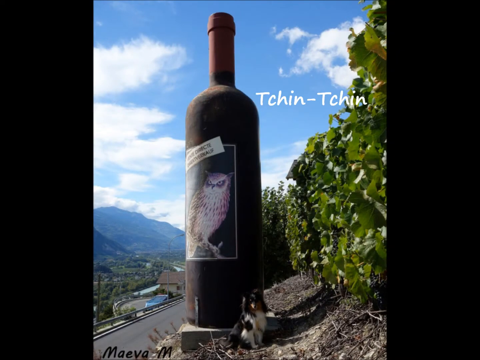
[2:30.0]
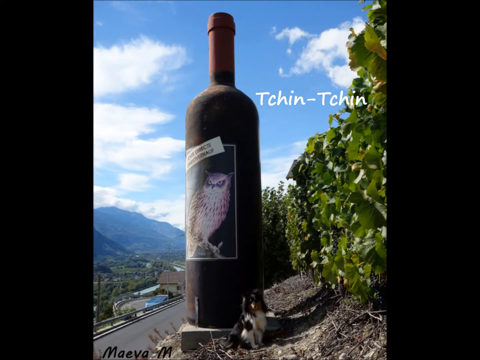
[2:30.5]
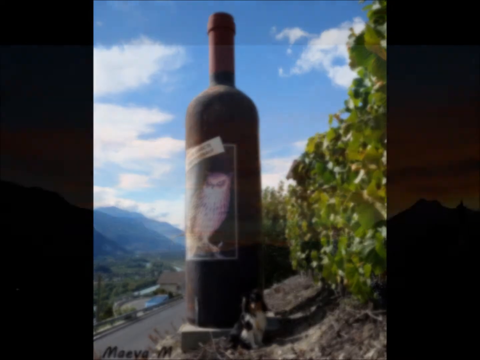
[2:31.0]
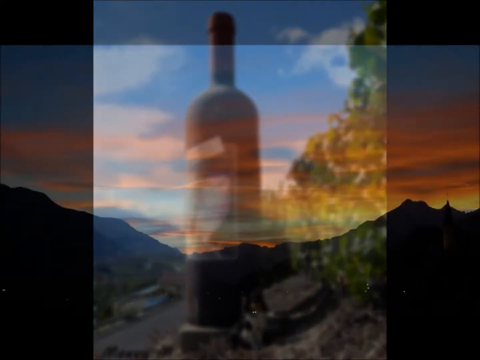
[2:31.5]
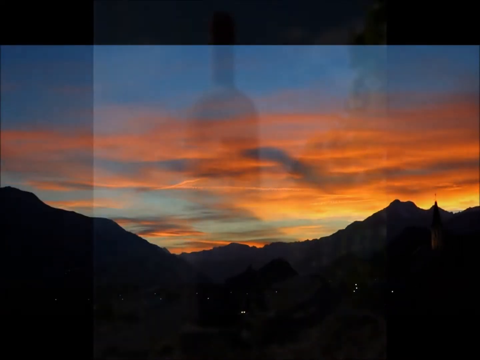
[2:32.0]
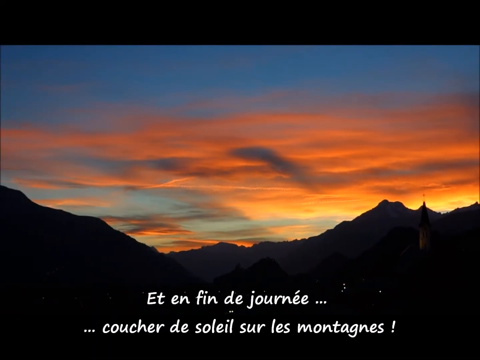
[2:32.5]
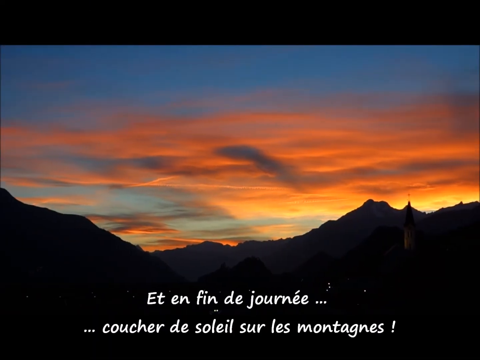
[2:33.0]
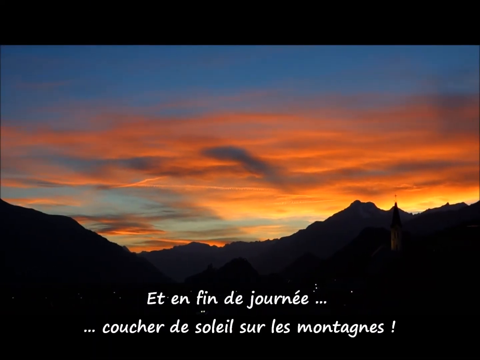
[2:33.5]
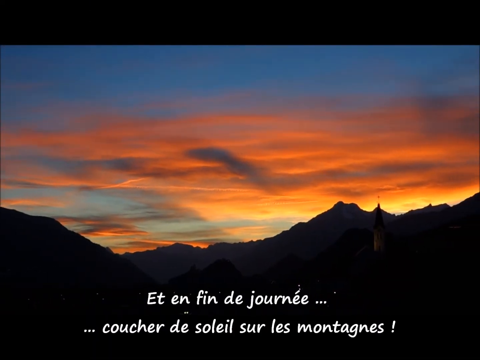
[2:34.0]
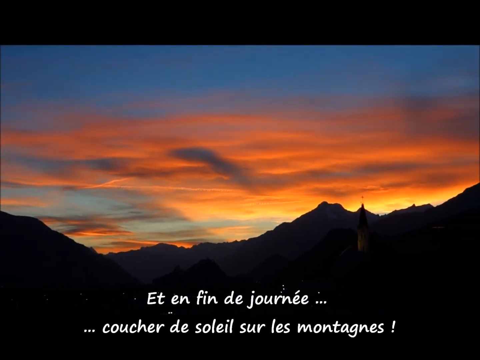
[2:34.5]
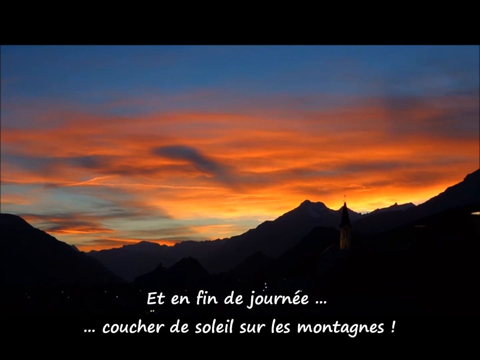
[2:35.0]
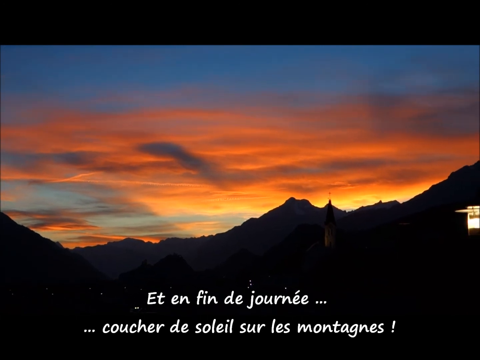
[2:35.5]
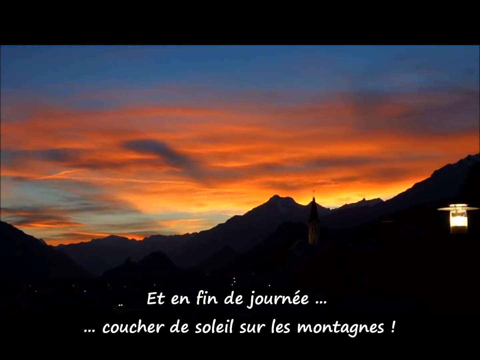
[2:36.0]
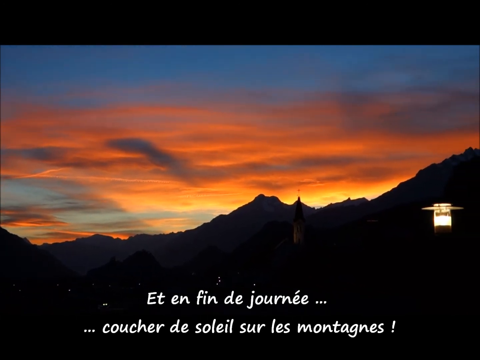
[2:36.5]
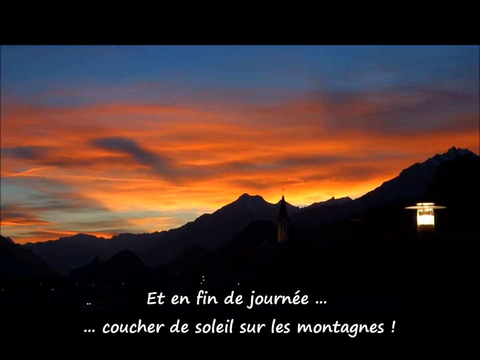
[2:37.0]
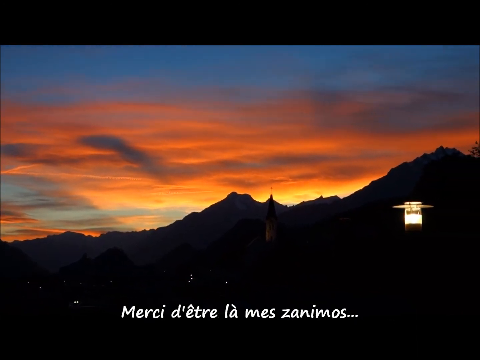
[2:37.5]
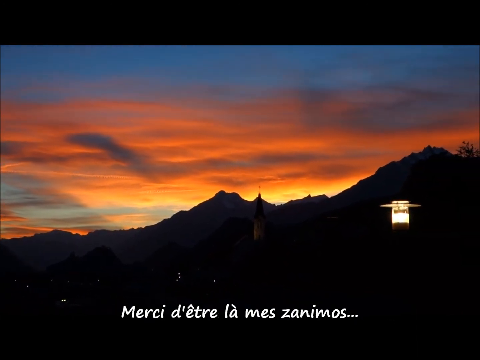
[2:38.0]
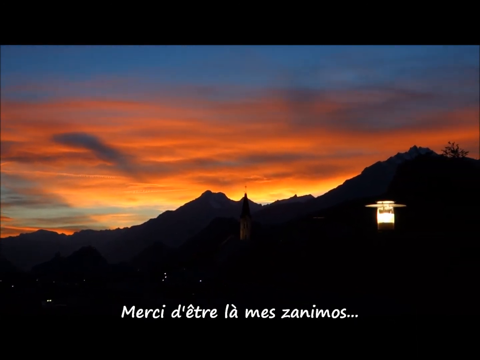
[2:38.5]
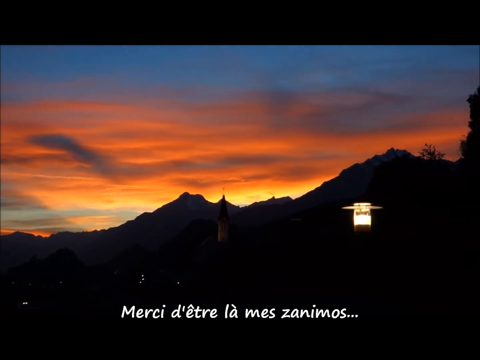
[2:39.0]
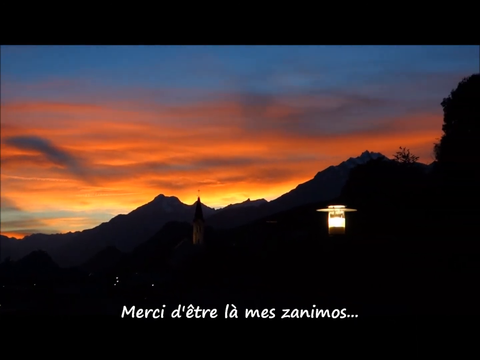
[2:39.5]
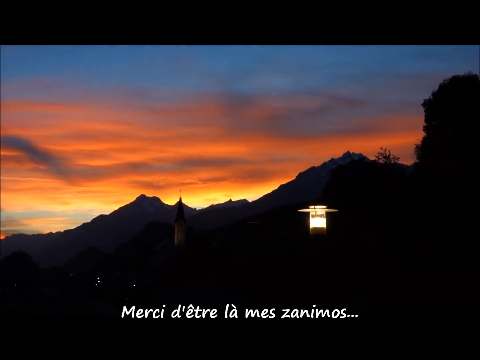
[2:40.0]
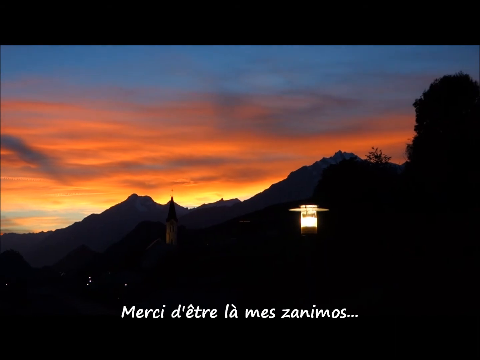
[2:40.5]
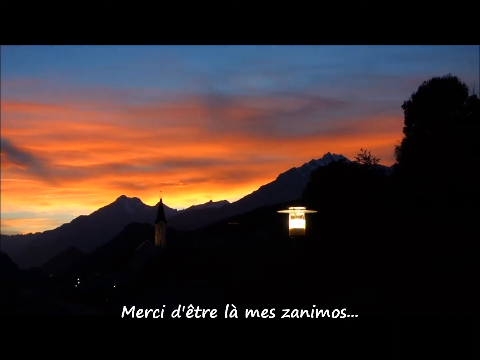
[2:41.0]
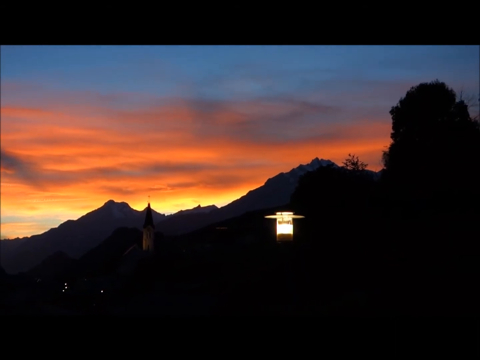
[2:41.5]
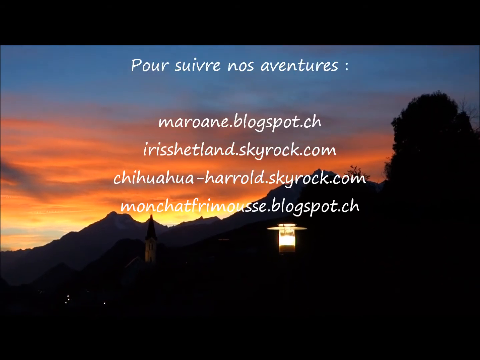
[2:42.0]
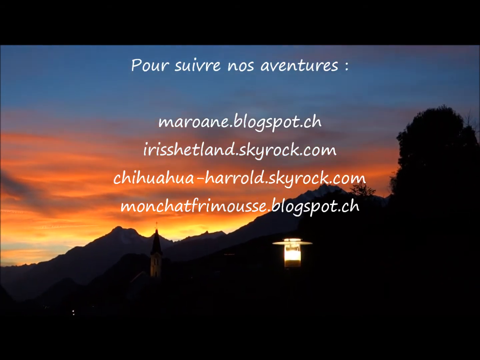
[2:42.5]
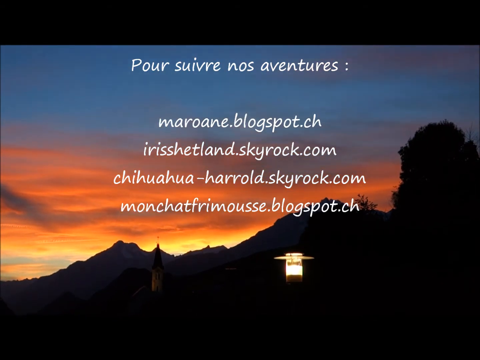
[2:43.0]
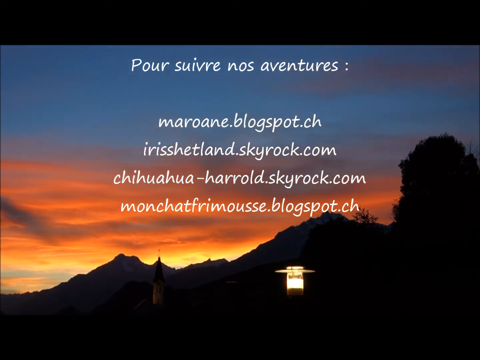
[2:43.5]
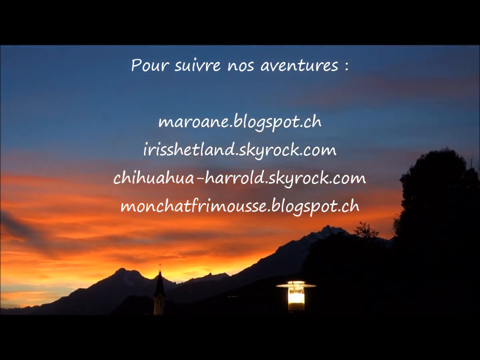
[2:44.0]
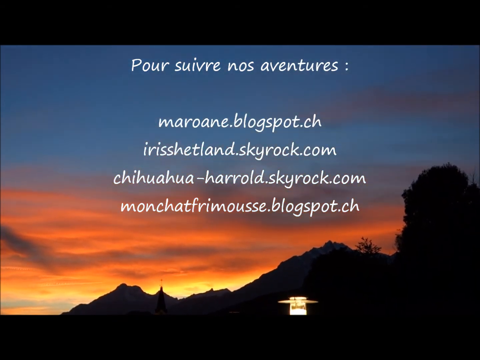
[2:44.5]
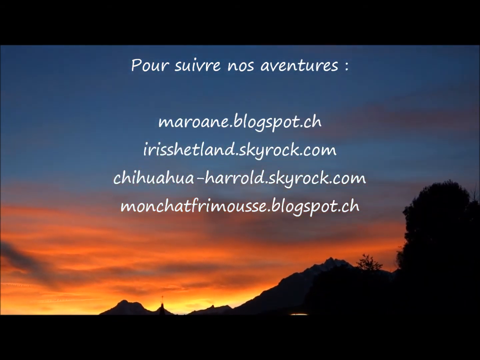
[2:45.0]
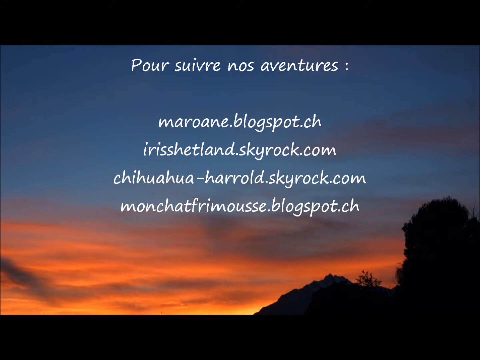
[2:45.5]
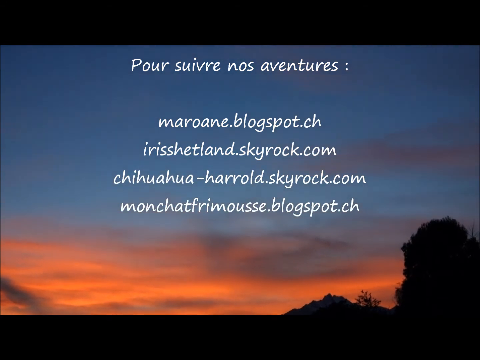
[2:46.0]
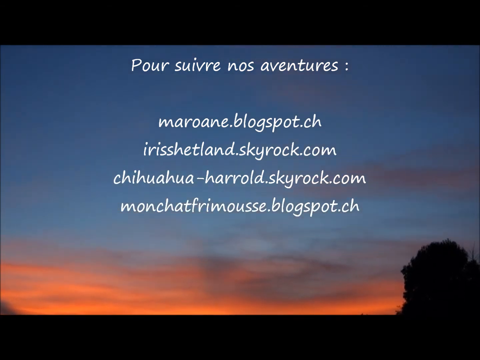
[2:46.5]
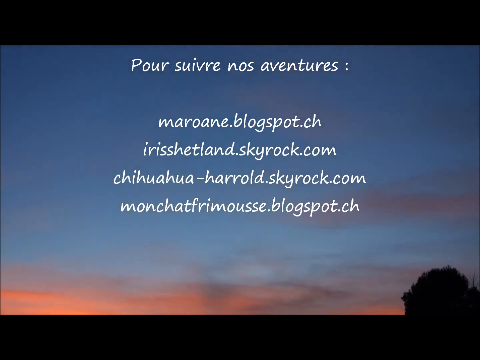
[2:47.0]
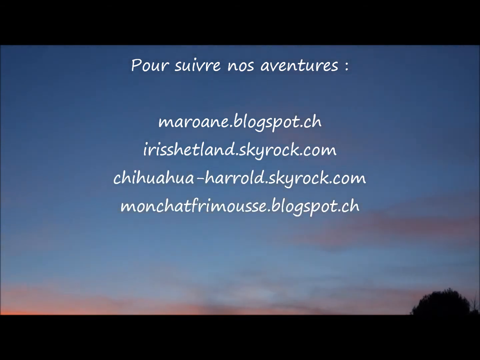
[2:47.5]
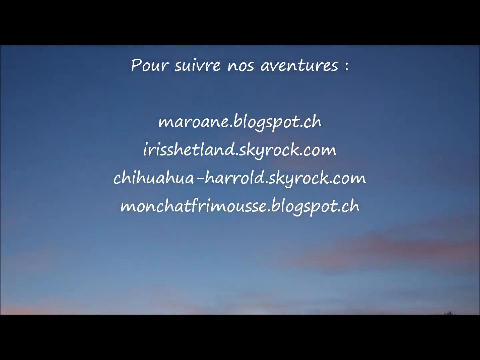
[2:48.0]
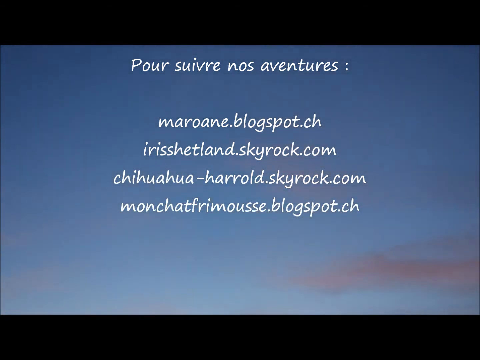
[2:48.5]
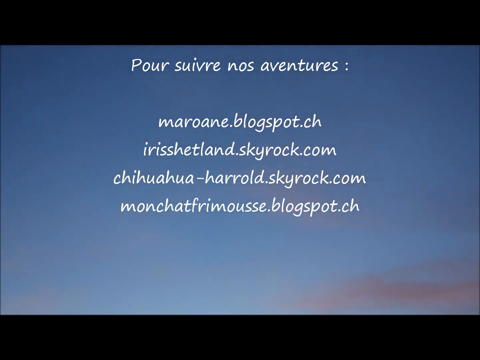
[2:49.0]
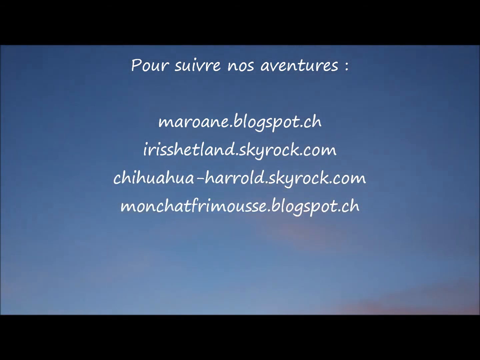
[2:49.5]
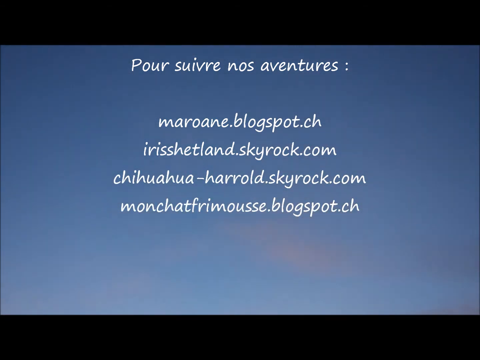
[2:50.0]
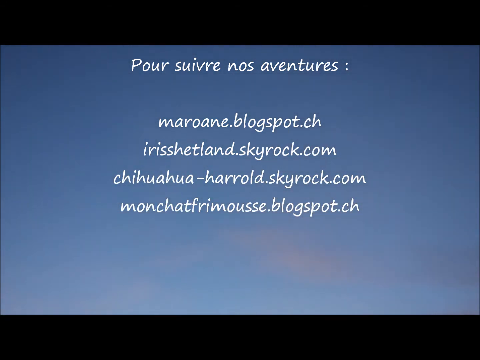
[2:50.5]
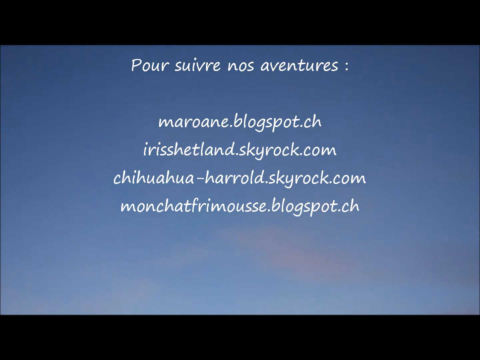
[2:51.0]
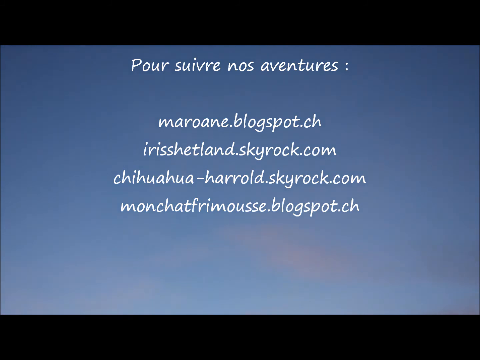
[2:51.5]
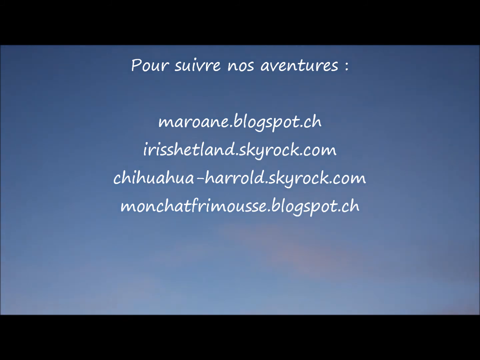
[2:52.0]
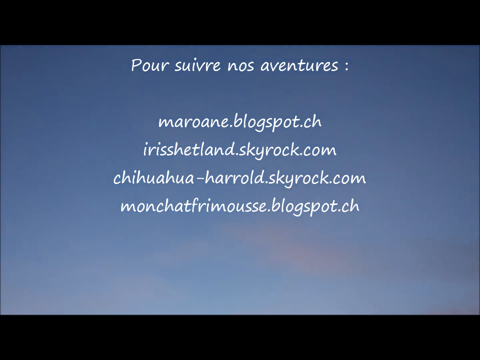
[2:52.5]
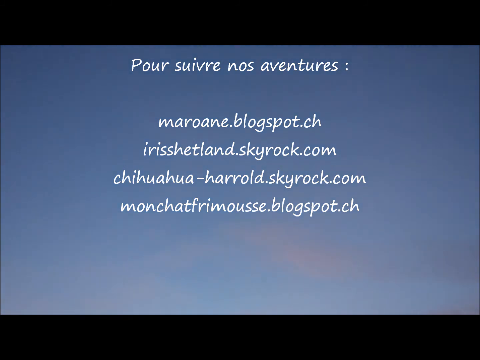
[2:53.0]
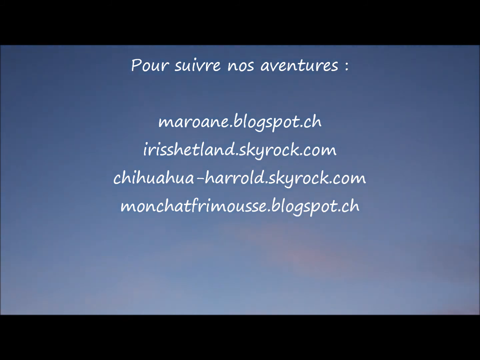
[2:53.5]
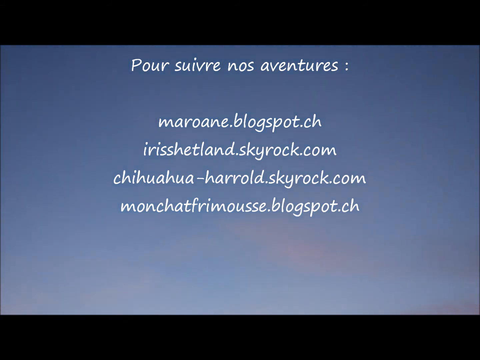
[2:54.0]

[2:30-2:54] The wine bottle is shown against a mostly blue sky with some clouds and vineyard across the back, with the text "TCHIN". The scene changes to an orange sunset sky with clouds over the outline of a mountain range as the sun goes down, and some lanterns kind of light up the way where the mountains are. More French text appears in white, which looks like it includes websites and information. The camera pans up very slowly across the burnt-orange sunset sky to blue sky higher up.